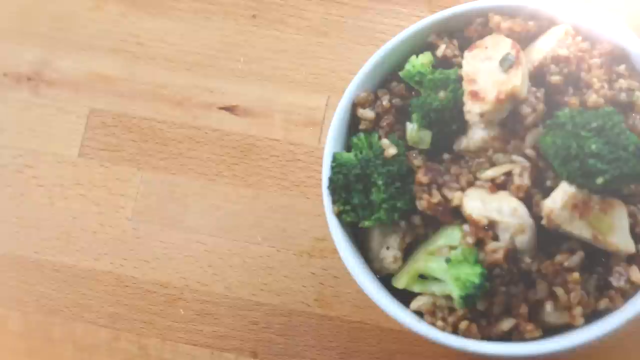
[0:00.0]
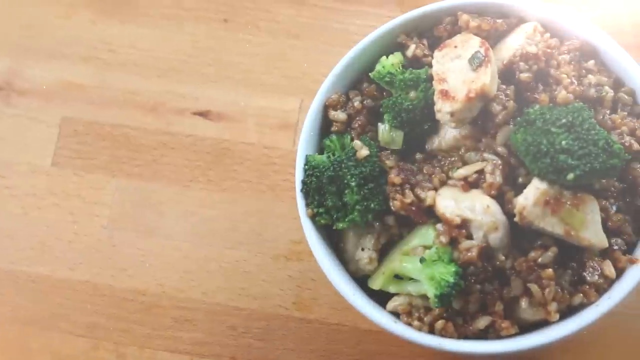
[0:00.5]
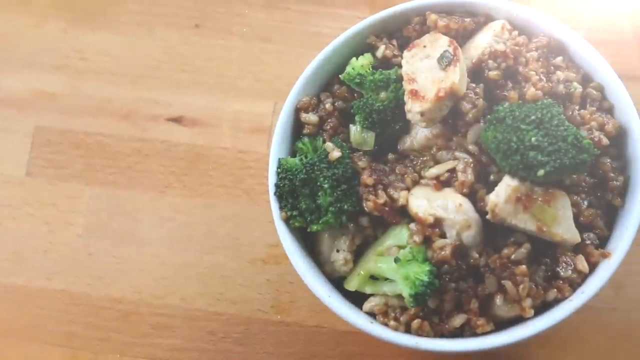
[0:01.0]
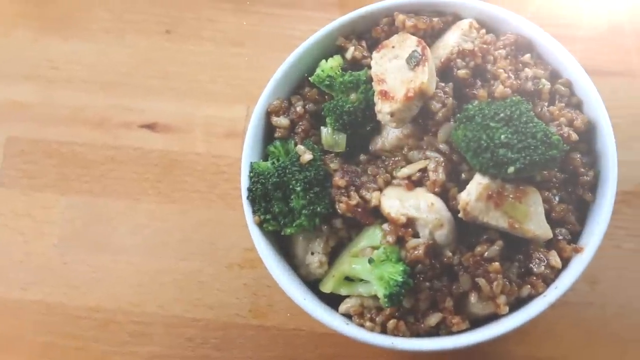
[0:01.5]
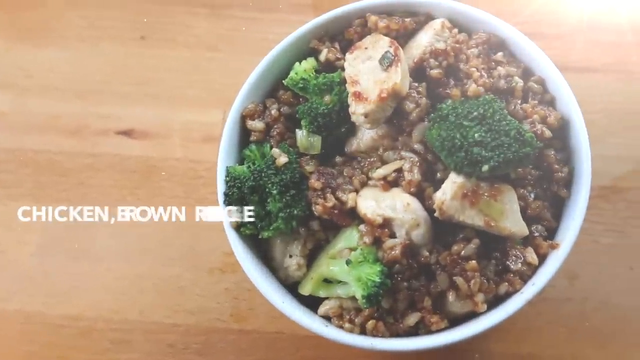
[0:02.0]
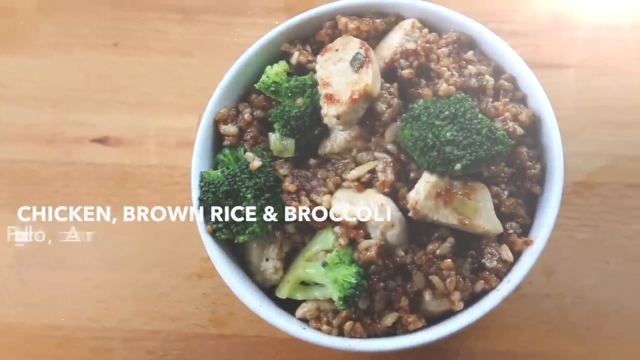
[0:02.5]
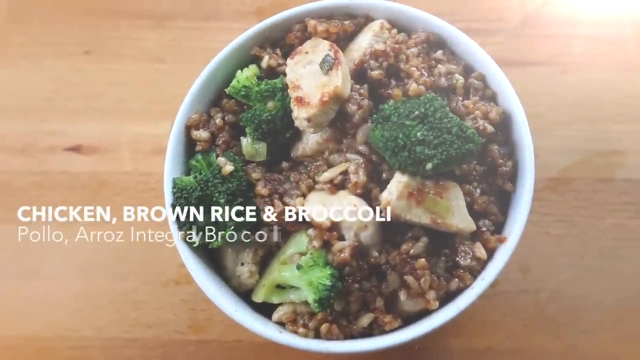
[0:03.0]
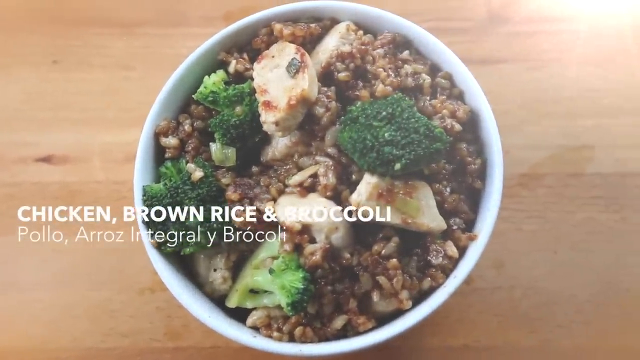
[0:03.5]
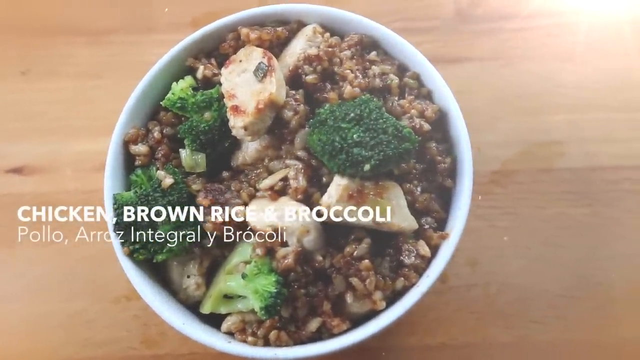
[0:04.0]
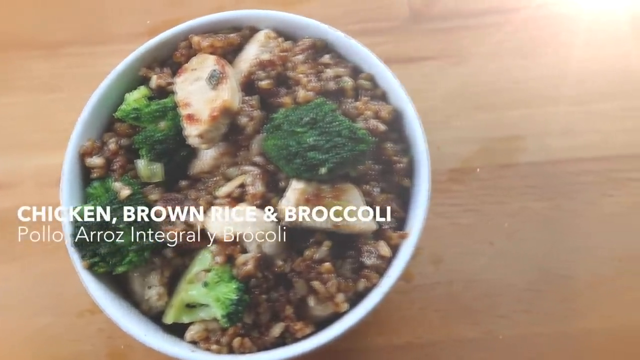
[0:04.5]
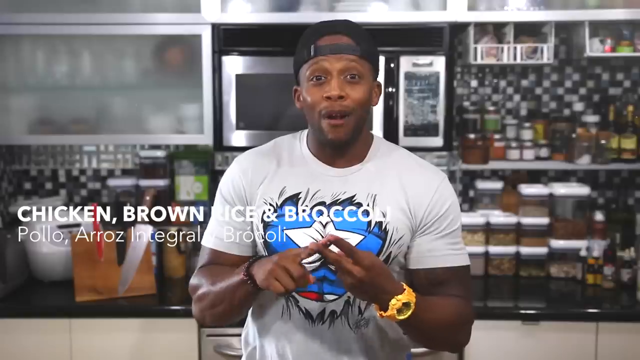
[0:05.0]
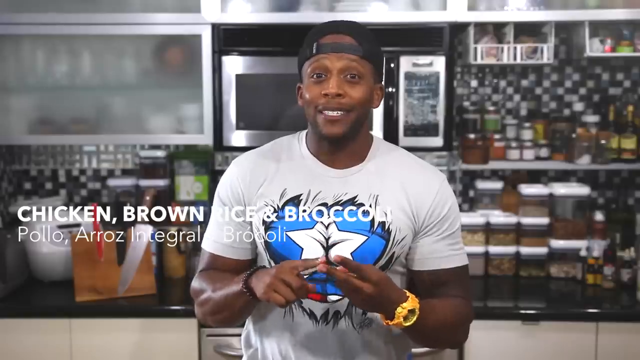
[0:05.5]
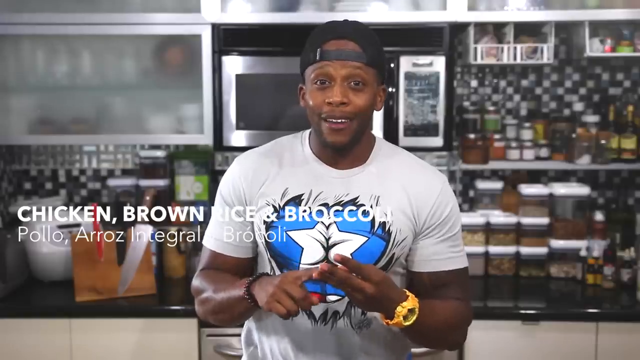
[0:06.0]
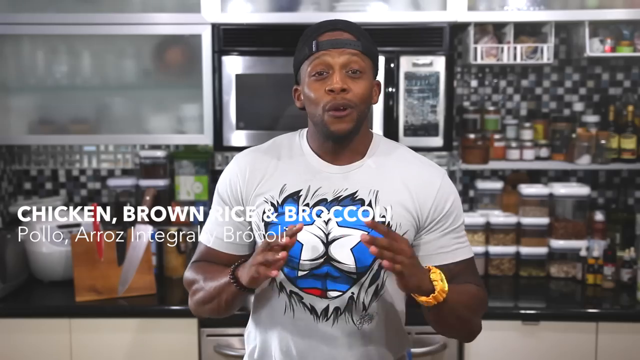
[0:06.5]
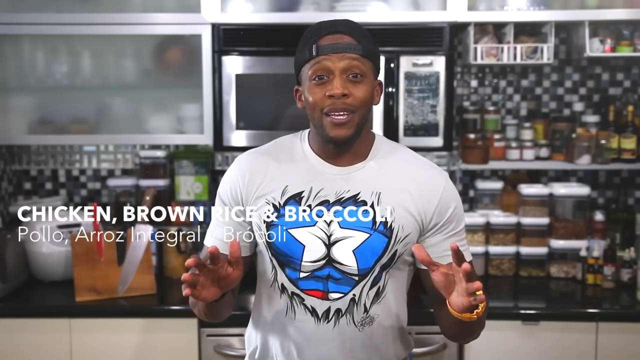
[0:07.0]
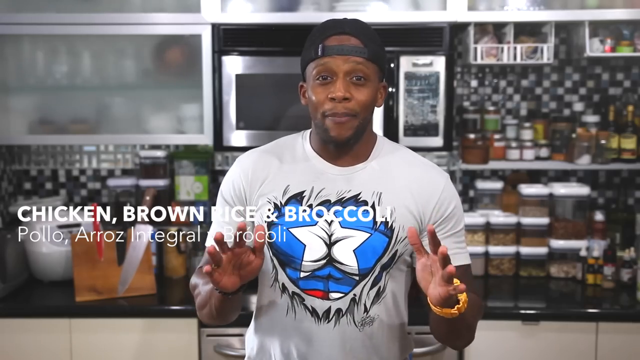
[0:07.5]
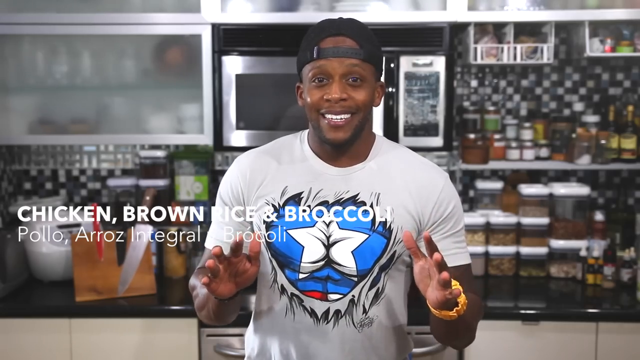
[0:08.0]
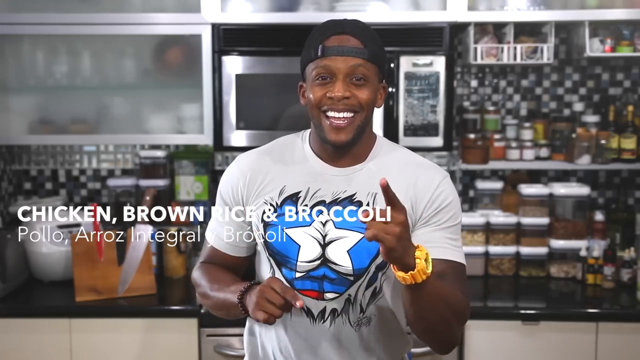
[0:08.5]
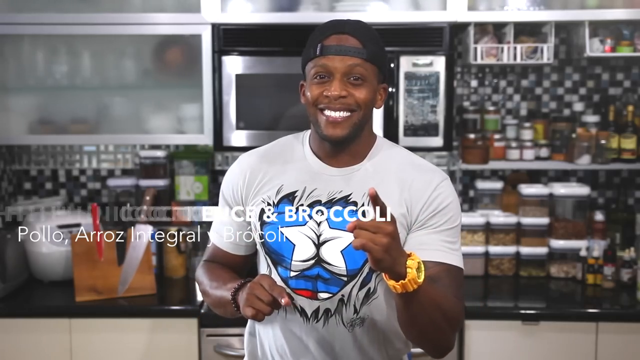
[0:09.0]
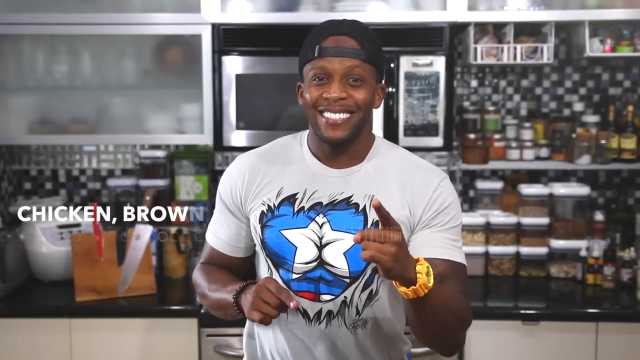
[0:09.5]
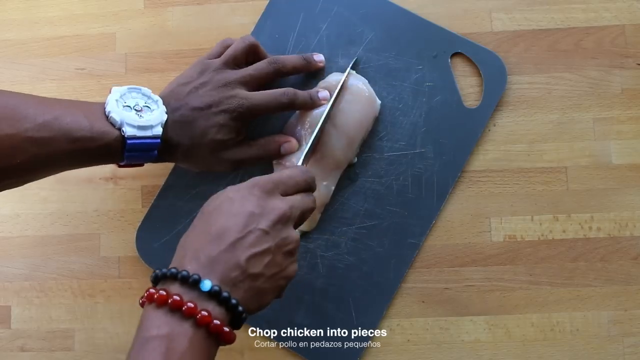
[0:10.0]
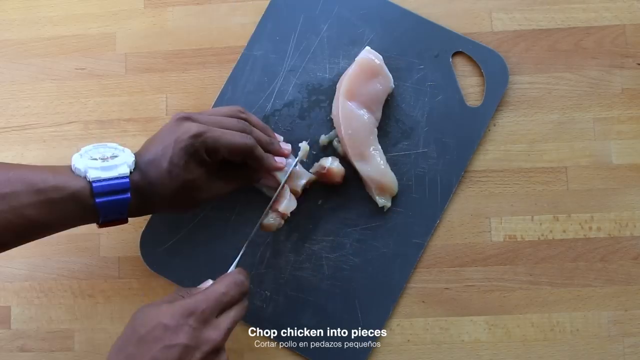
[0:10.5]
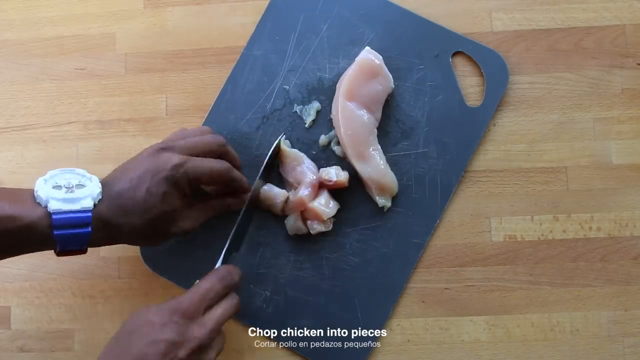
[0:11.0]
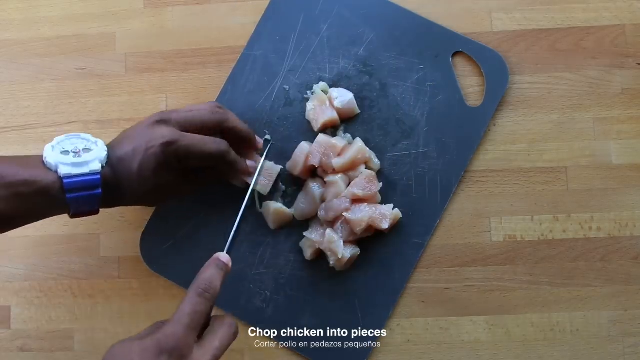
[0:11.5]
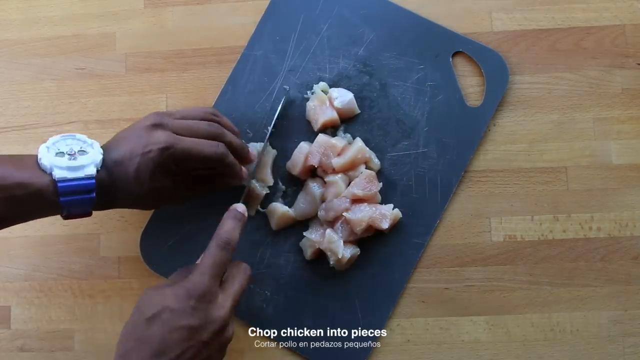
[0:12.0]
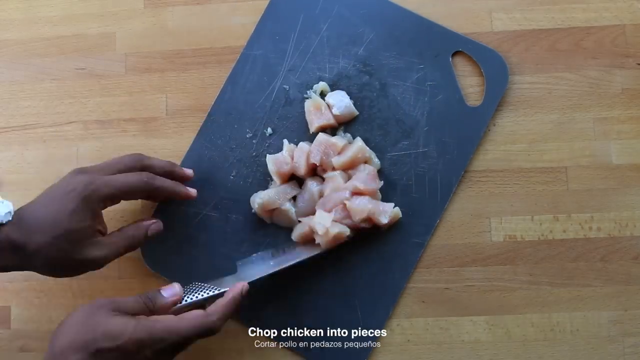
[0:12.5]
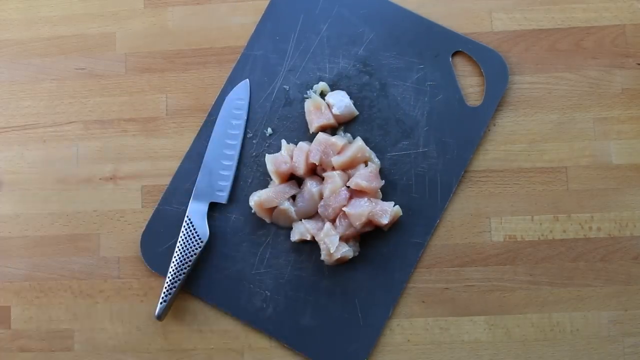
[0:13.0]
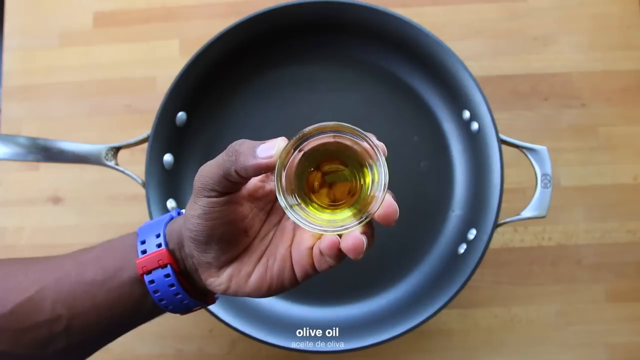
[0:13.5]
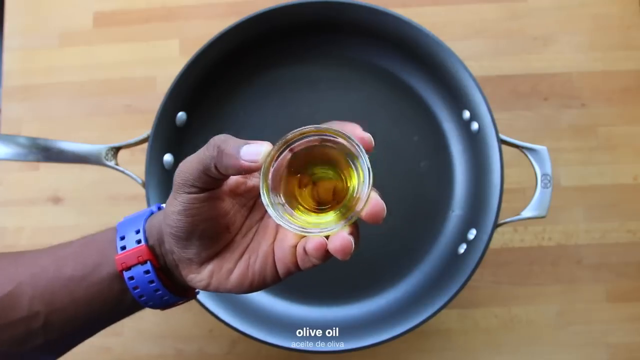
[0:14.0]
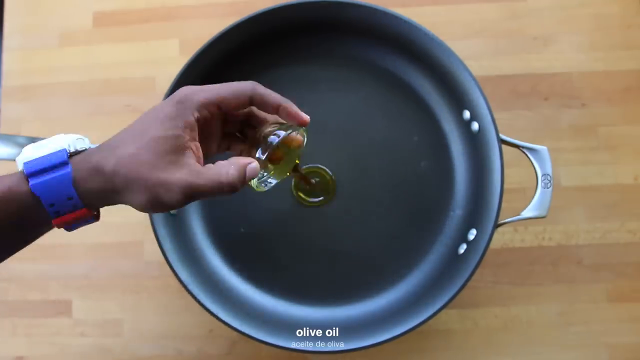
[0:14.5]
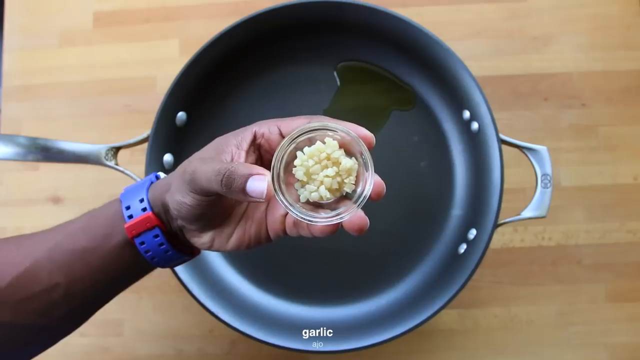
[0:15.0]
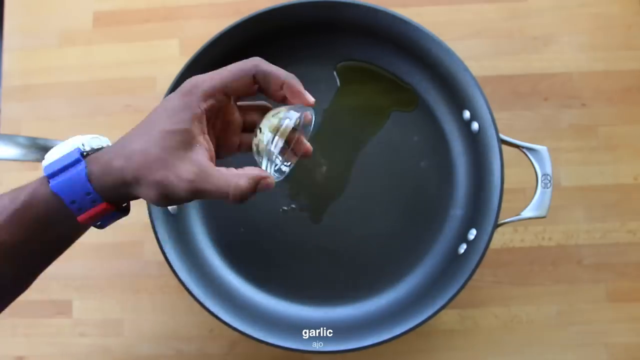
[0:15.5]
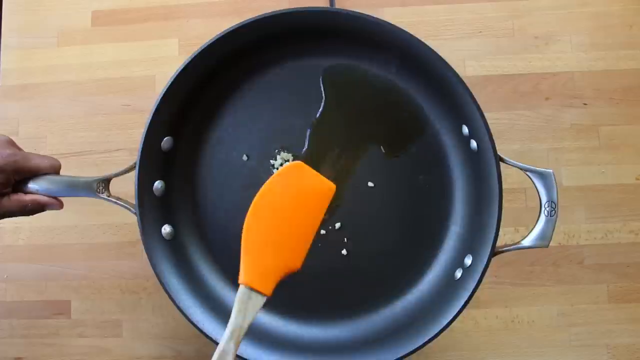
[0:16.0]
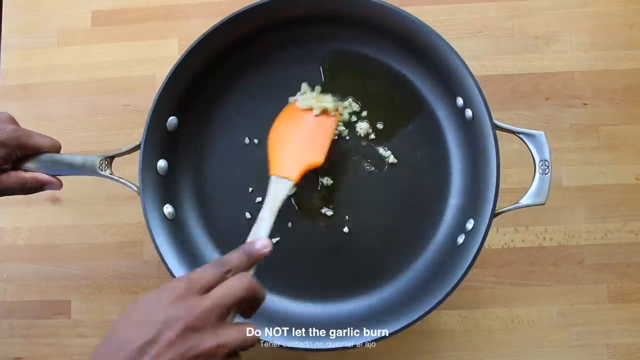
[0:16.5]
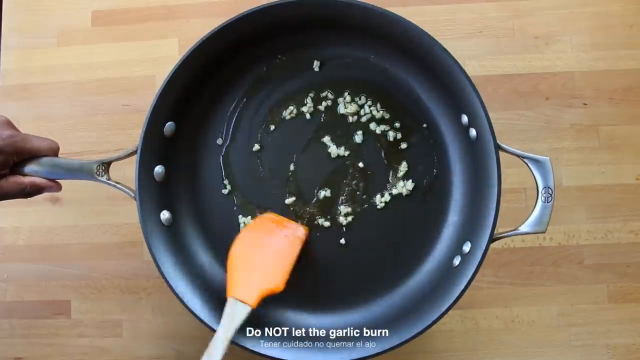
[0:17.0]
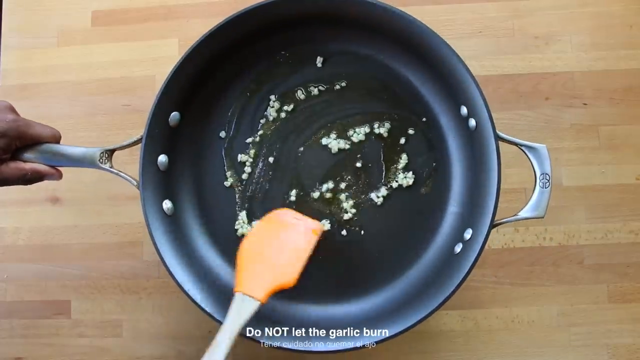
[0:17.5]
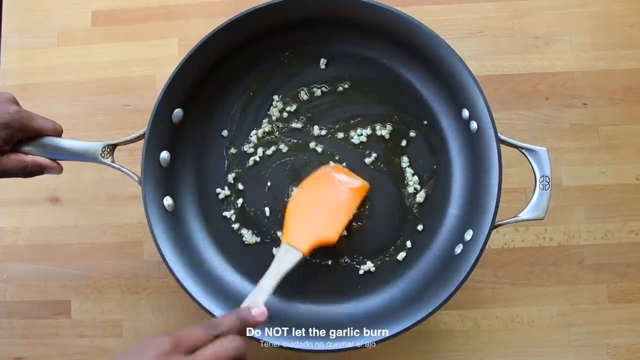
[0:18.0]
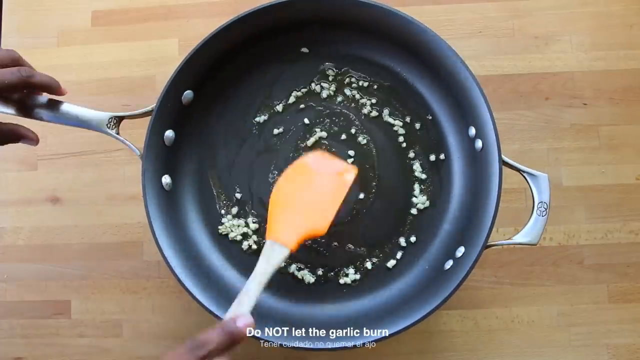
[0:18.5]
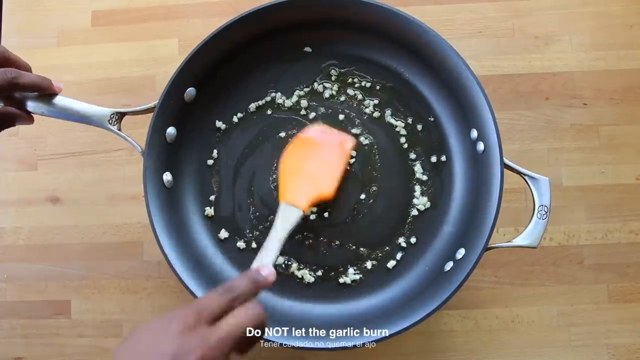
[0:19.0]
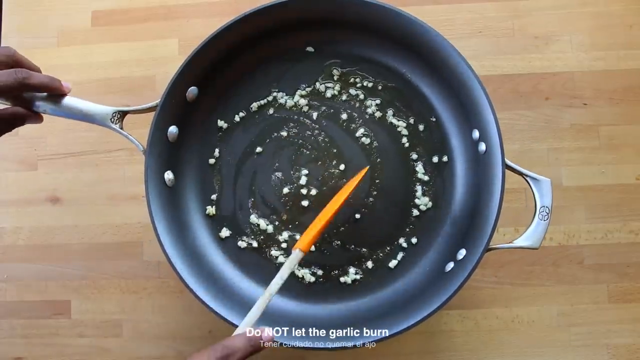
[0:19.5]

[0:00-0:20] A cooking video demonstrates a chicken, brown rice and broccoli recipe, identifiable from the ingredients shown and from text that pops up over the video. A young man prepares it in a kitchen; he wears a gray t-shirt with a kind of superhero-style tear in the middle, so it looks like a superhero's chest is showing. The kitchen is very modern, with a black and white color scheme behind him and various ingredients stacked up in containers in the background. Zoomed-in shots show a cutting board where he slices chicken into small pieces. He then puts oil and garlic into a frying pan and kind of mixes them around as they begin to cook, while a message at the bottom reminds the viewer not to let the garlic burn.